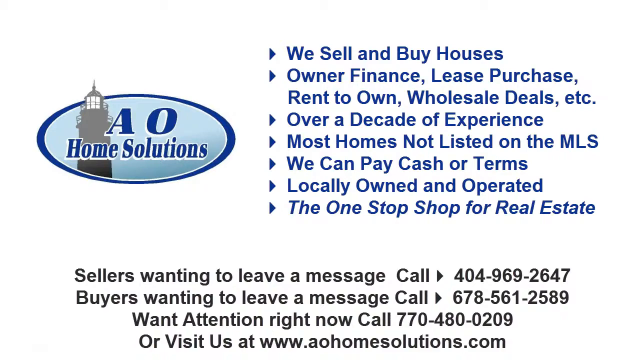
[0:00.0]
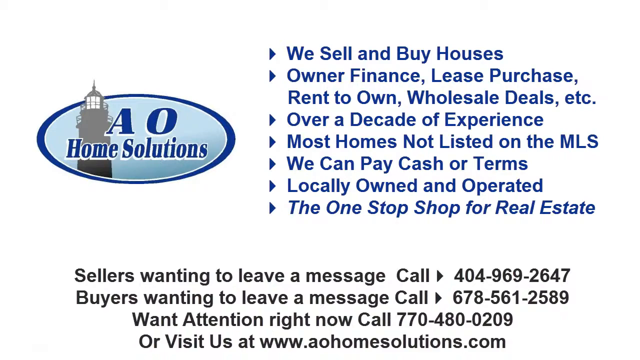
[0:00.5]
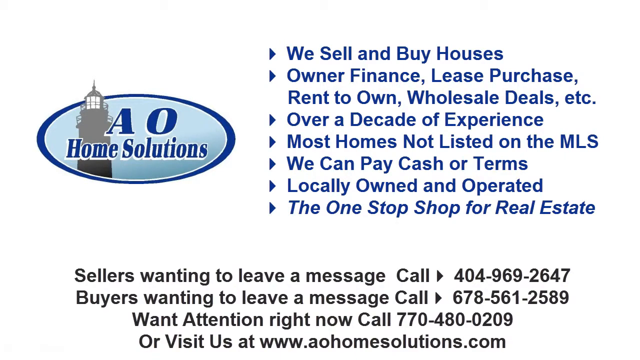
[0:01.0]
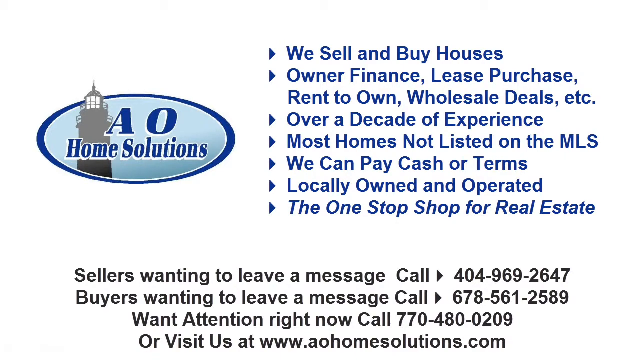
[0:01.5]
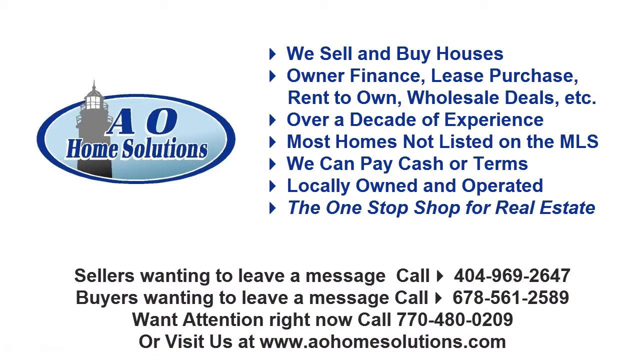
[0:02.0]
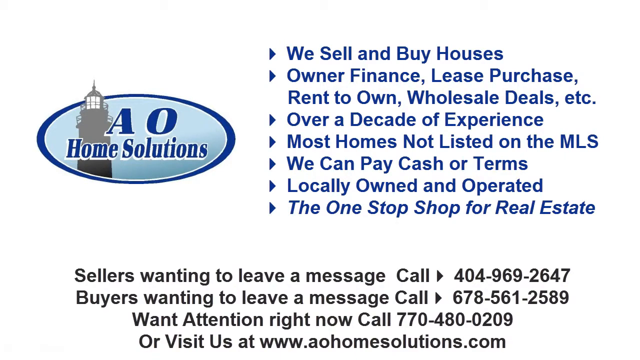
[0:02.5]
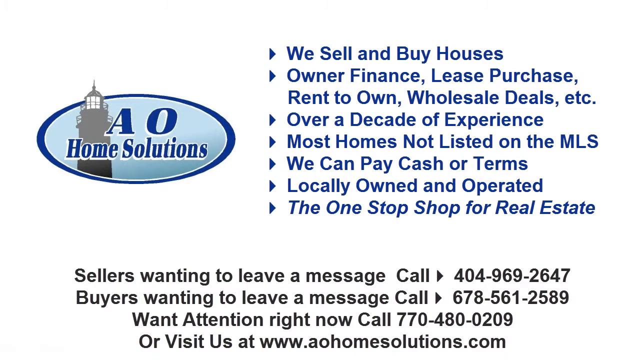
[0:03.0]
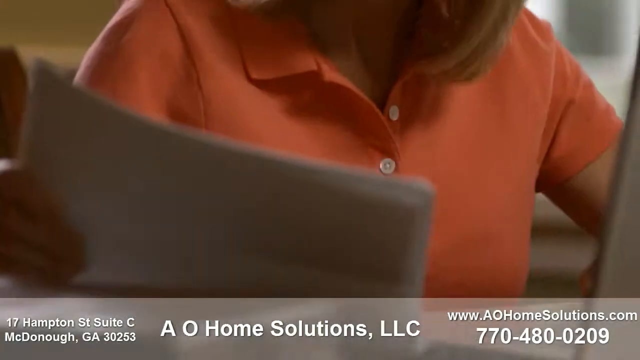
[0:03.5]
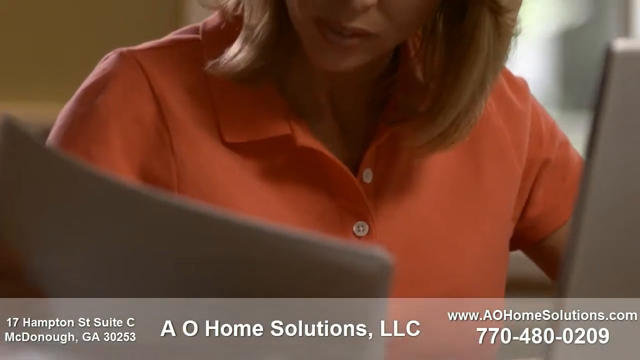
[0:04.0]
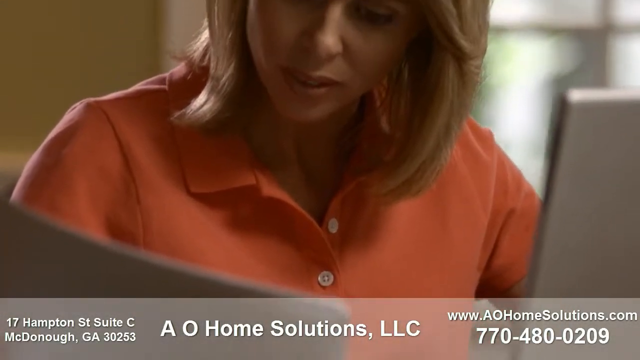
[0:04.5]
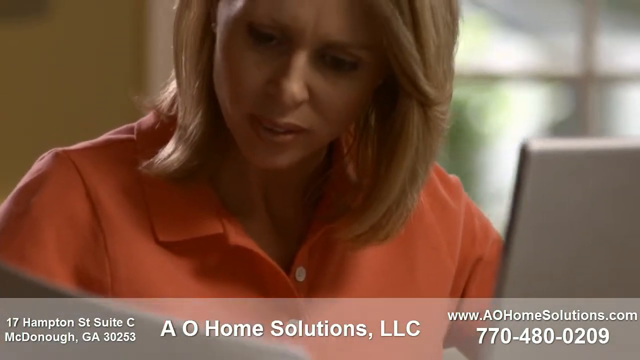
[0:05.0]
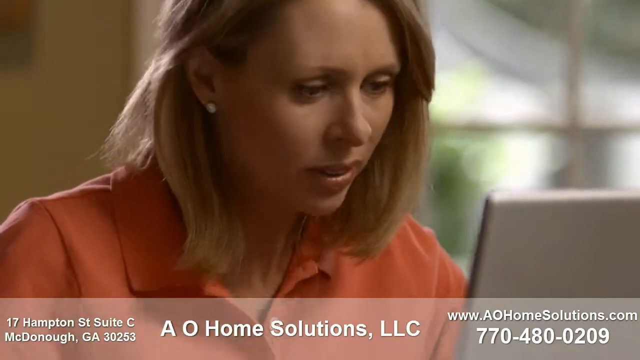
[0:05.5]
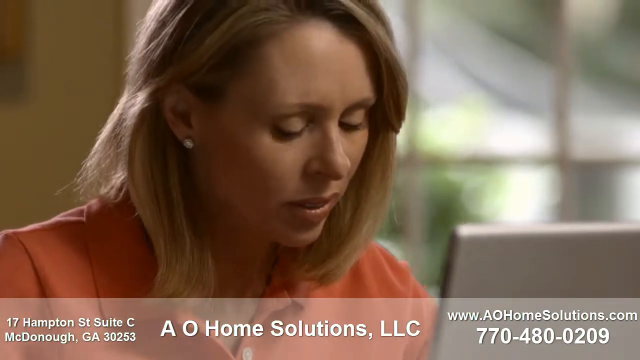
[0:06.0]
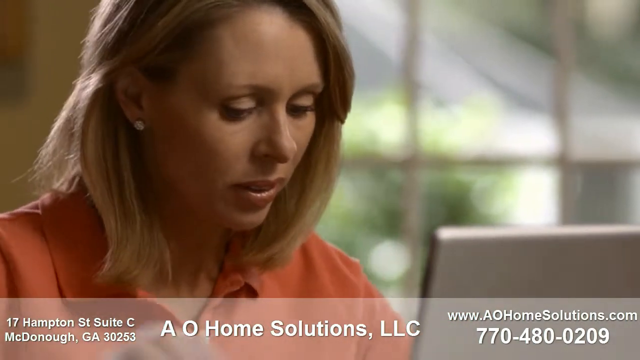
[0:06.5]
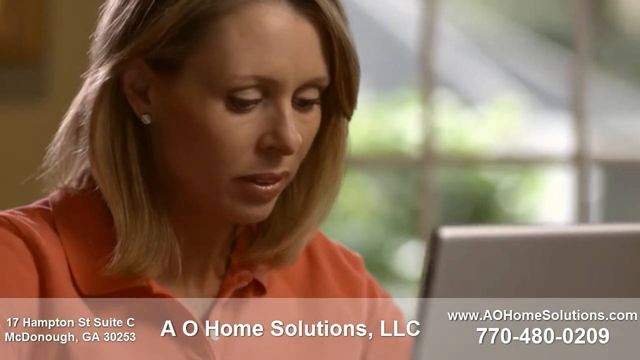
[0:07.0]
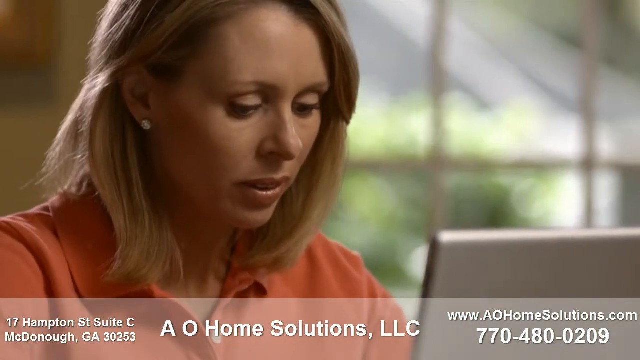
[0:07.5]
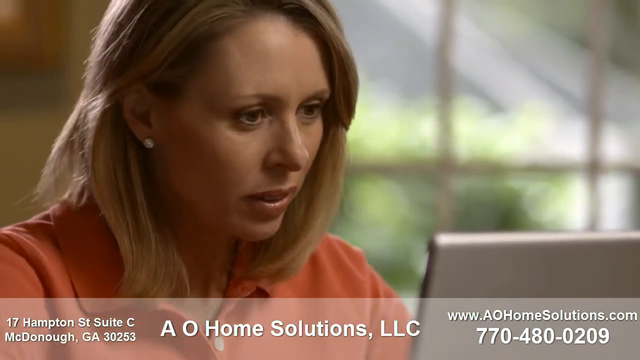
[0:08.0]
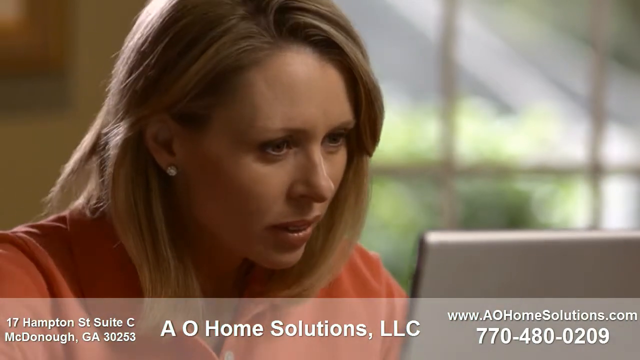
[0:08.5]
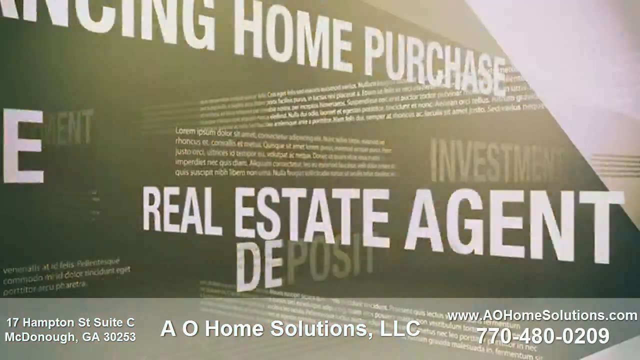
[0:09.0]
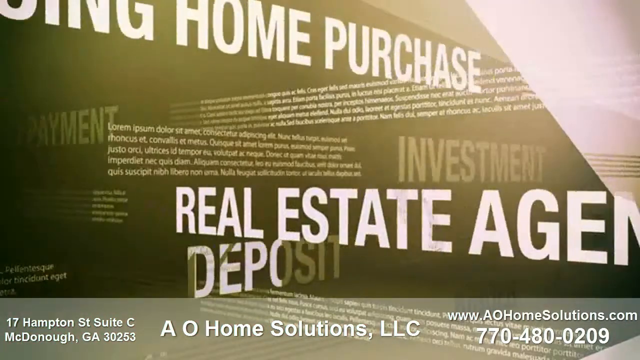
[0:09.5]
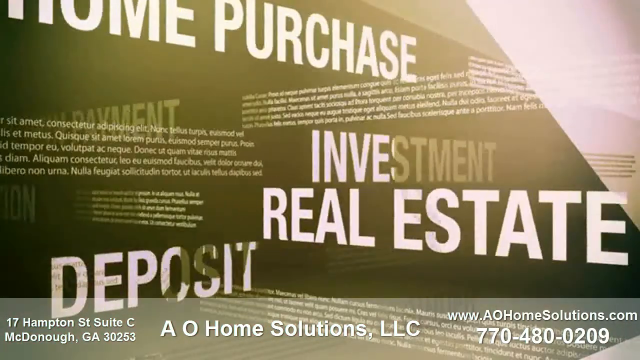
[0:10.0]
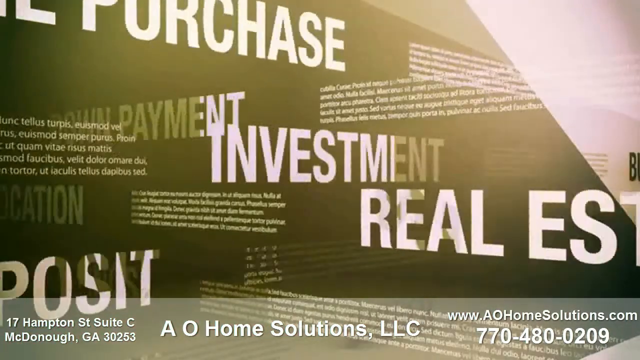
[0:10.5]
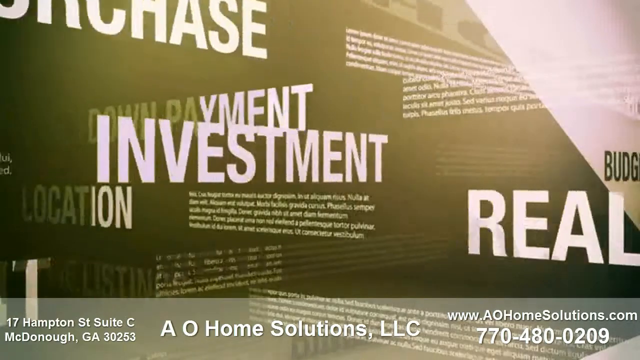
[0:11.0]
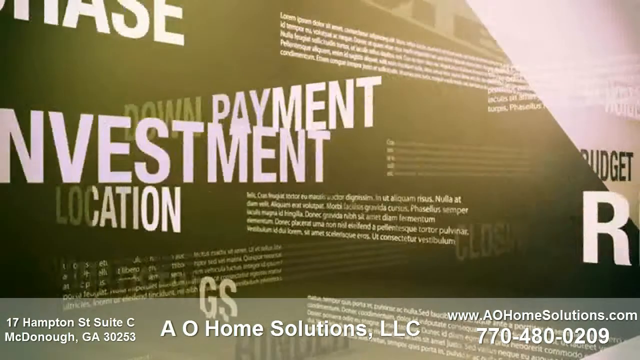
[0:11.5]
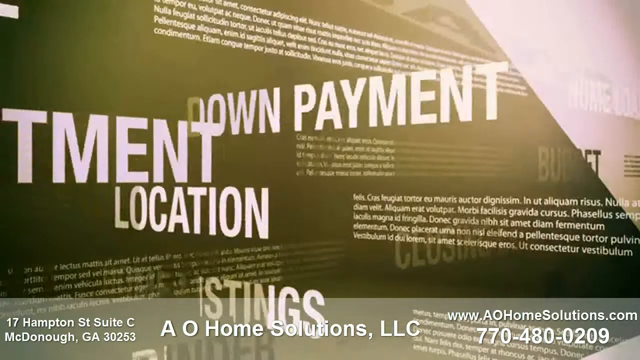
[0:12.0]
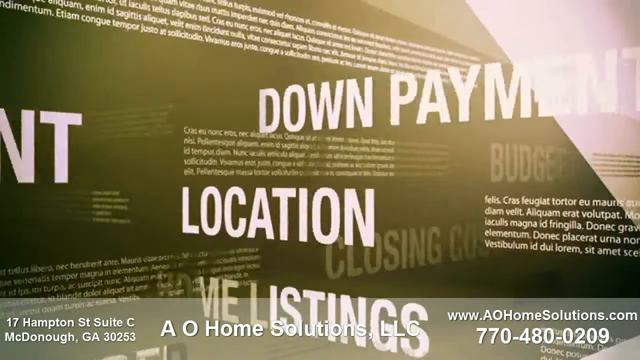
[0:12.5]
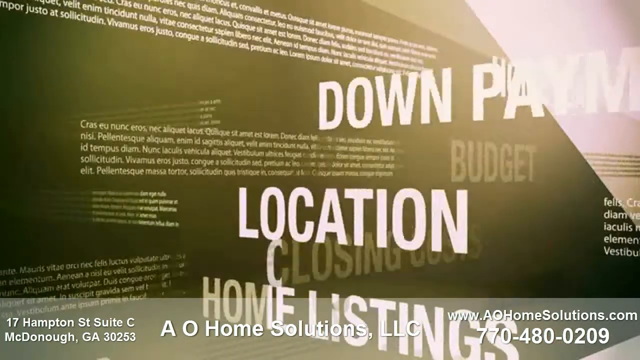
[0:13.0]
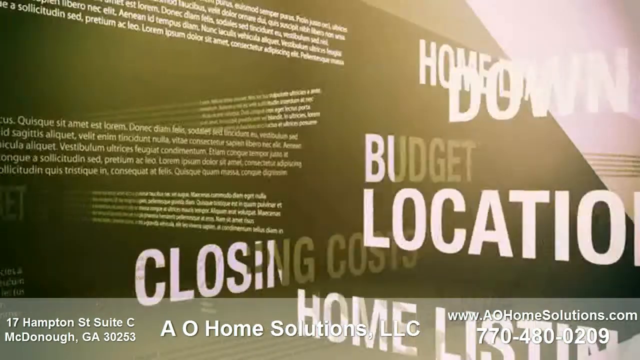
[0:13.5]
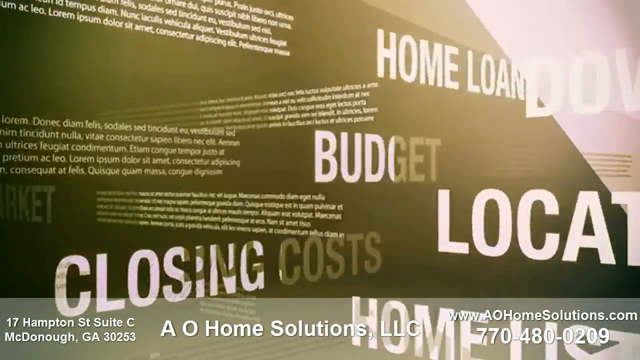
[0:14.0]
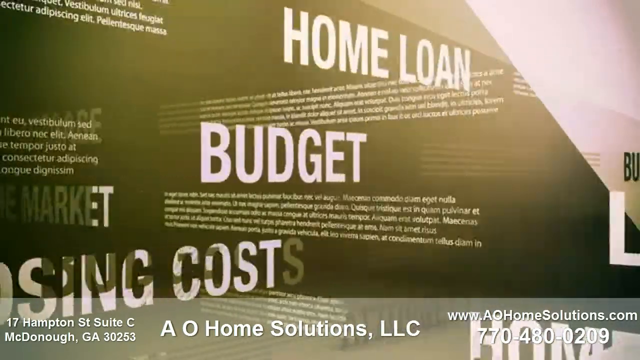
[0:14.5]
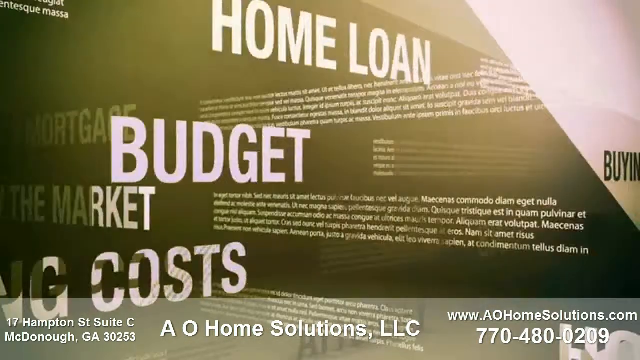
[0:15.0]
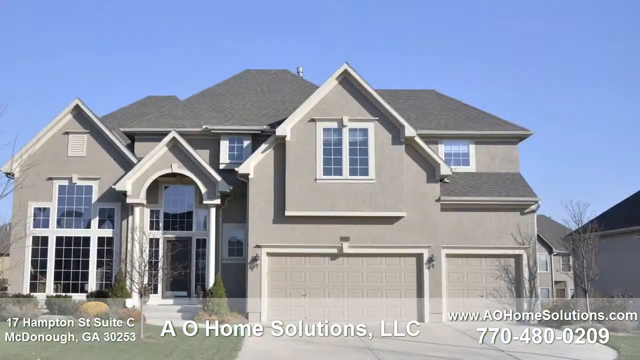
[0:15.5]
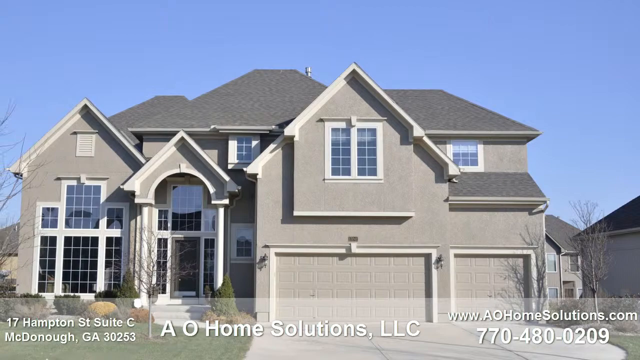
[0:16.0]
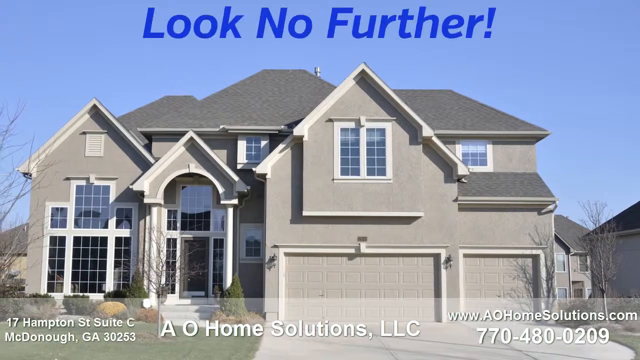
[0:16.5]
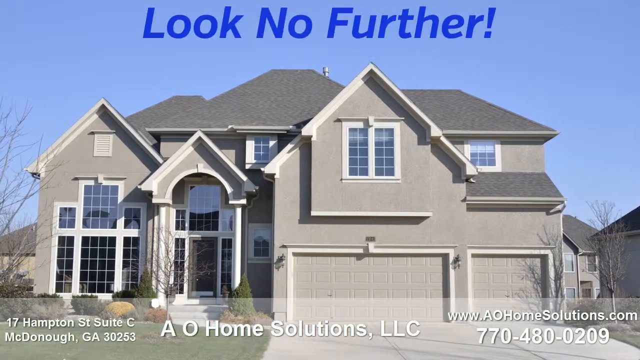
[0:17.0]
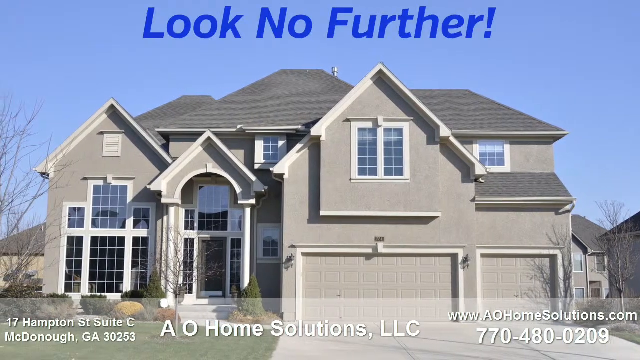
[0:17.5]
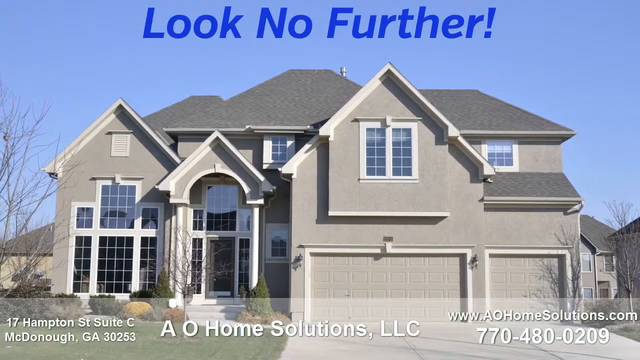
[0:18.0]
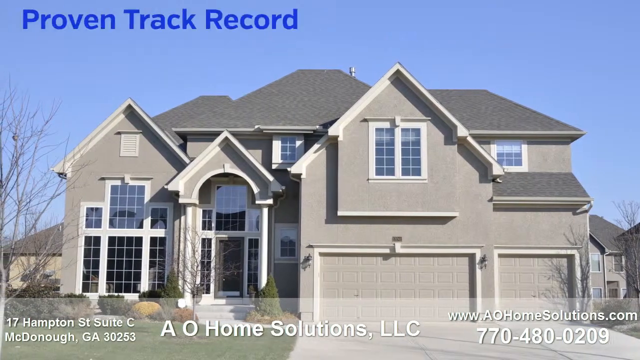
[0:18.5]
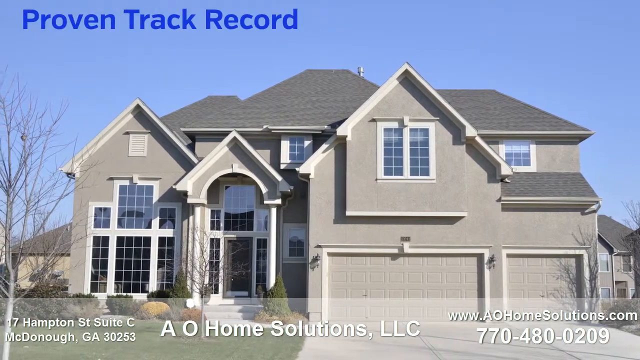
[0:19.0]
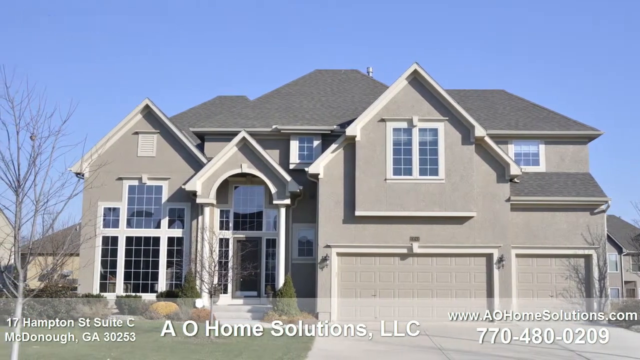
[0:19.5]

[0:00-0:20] The video appears to be about real estate: buying and searching for homes. A fairly decent home that is not very extravagant is shown, and it looks like people want to come and sell it or ask questions about it. An even bigger home that would cost more money is also involved.